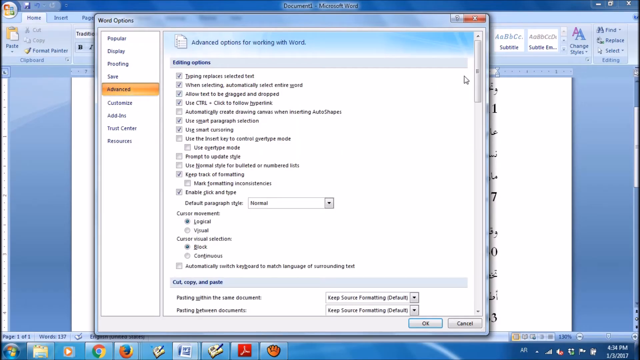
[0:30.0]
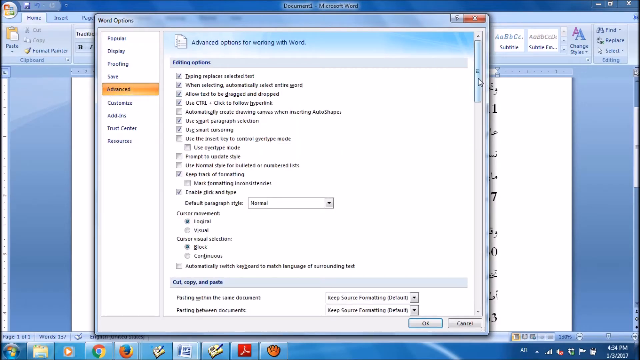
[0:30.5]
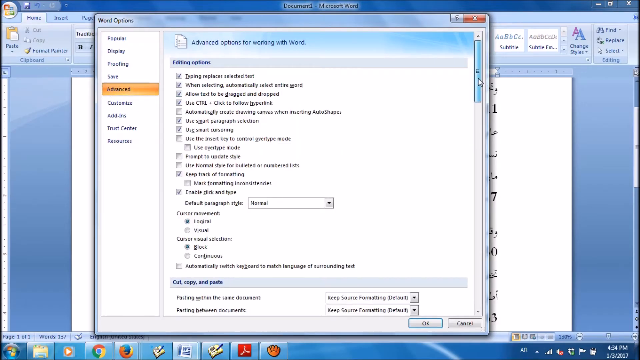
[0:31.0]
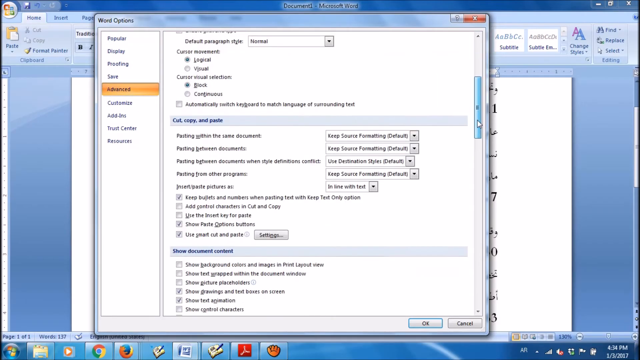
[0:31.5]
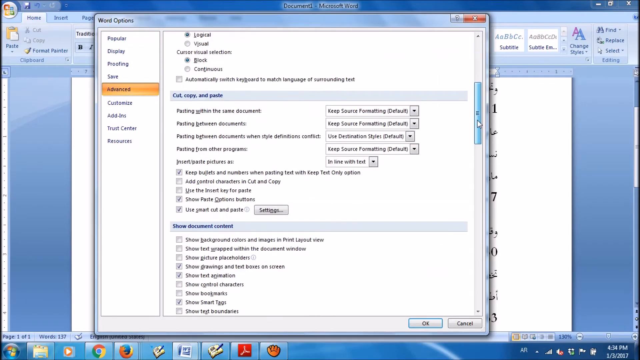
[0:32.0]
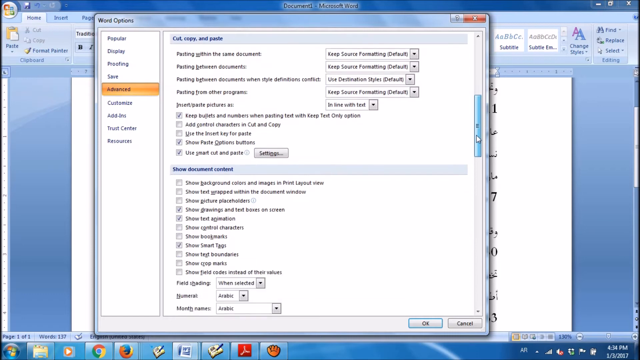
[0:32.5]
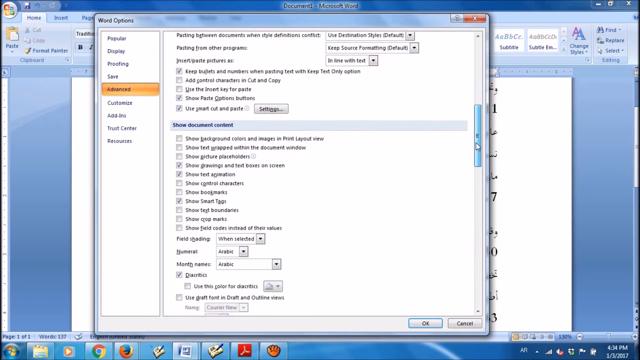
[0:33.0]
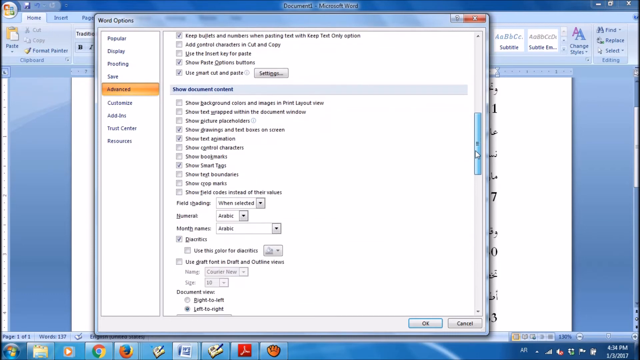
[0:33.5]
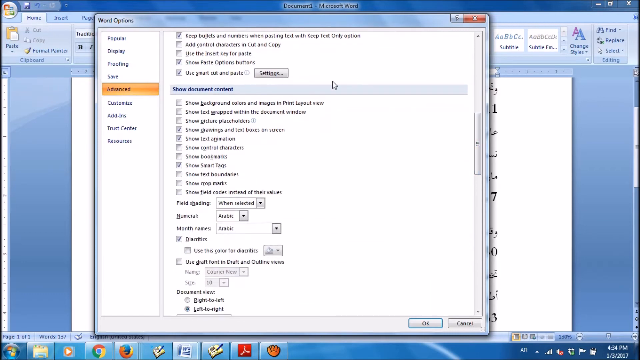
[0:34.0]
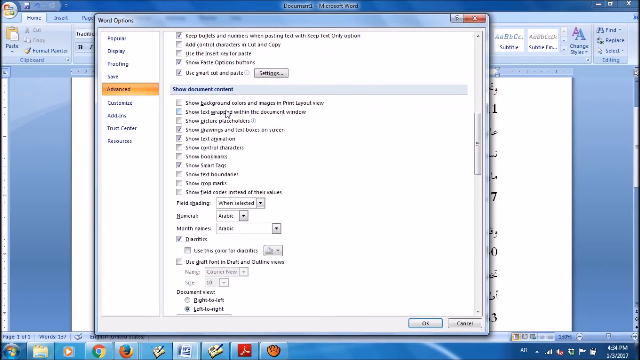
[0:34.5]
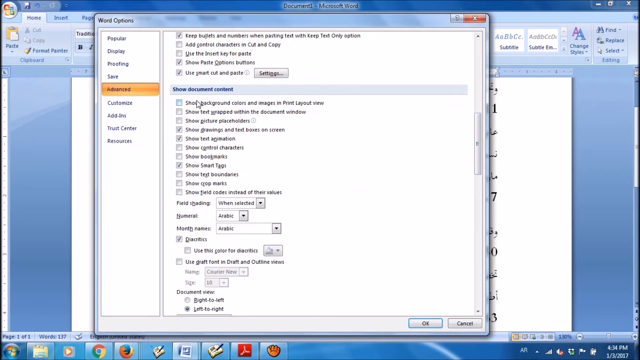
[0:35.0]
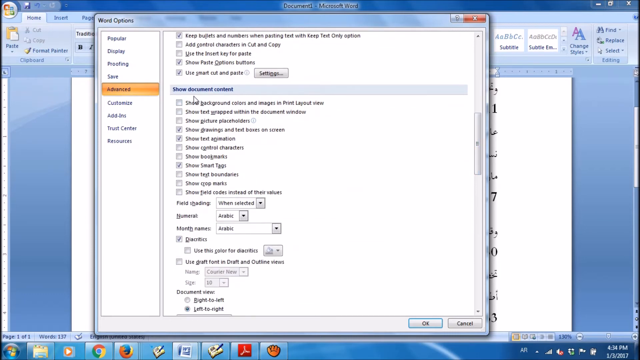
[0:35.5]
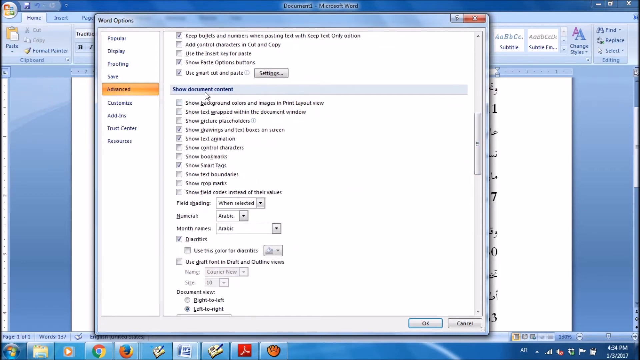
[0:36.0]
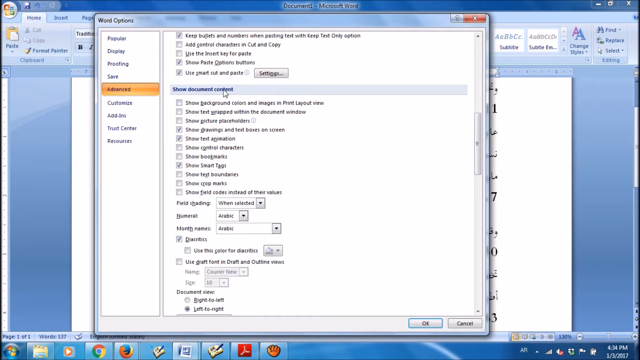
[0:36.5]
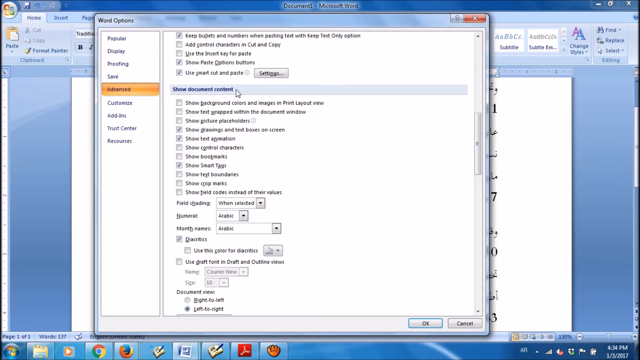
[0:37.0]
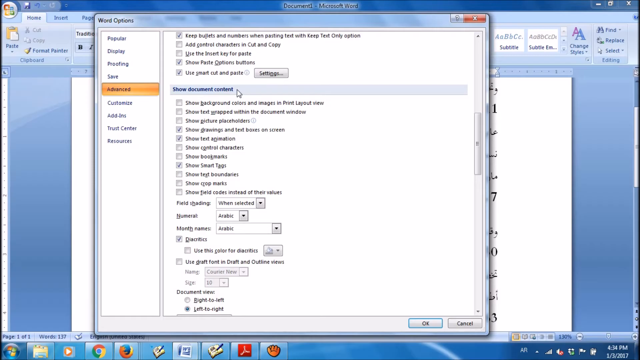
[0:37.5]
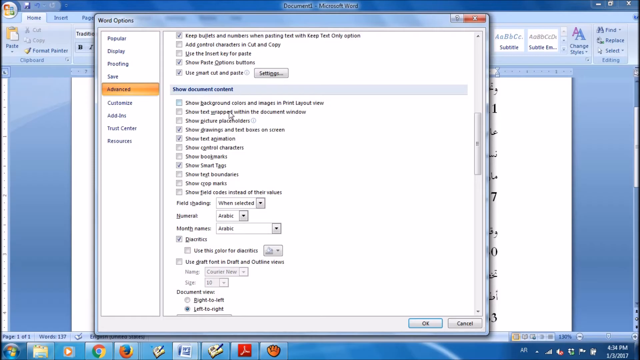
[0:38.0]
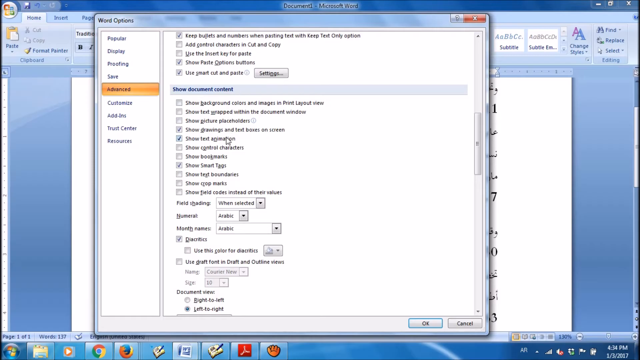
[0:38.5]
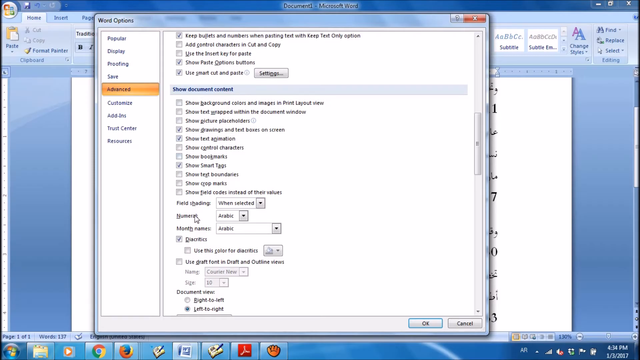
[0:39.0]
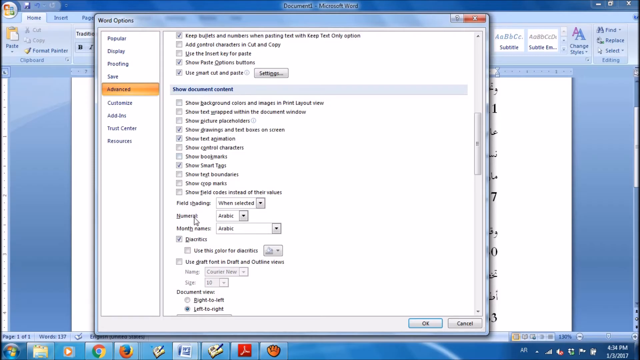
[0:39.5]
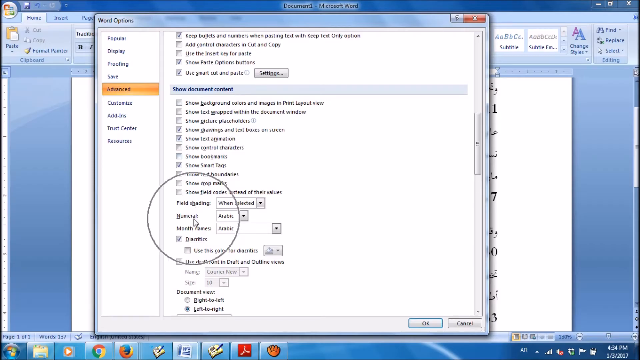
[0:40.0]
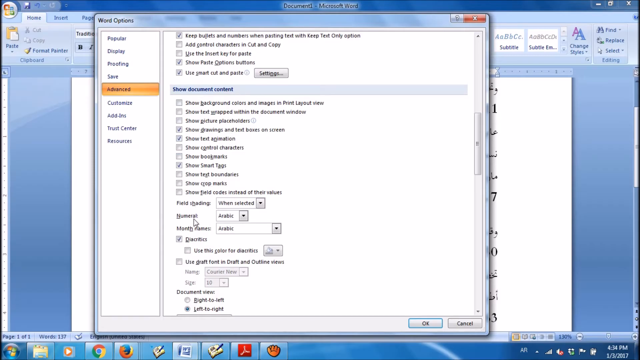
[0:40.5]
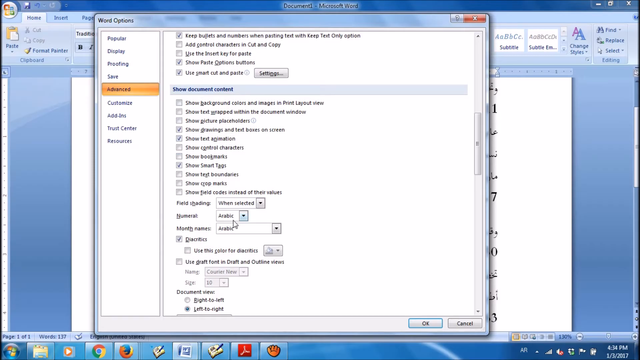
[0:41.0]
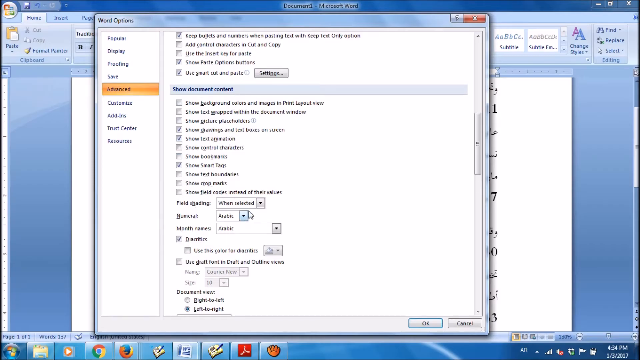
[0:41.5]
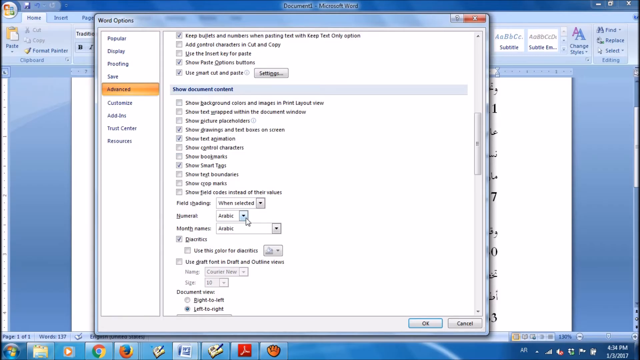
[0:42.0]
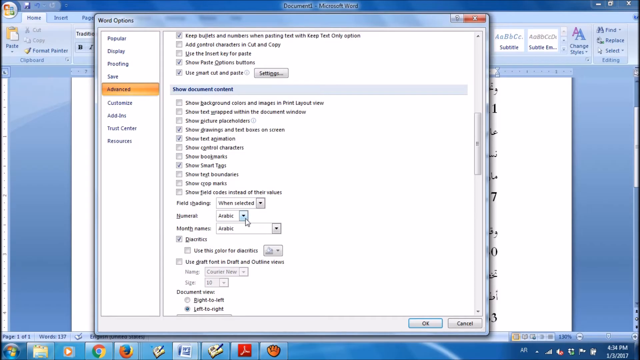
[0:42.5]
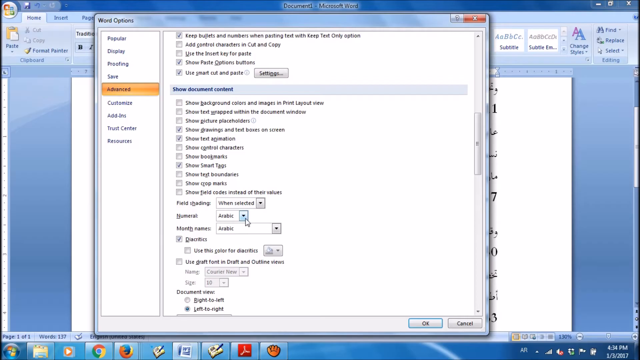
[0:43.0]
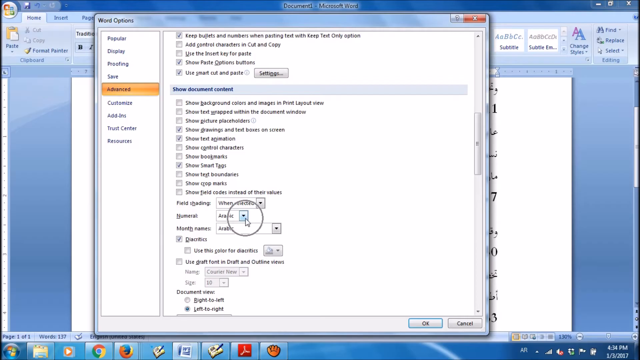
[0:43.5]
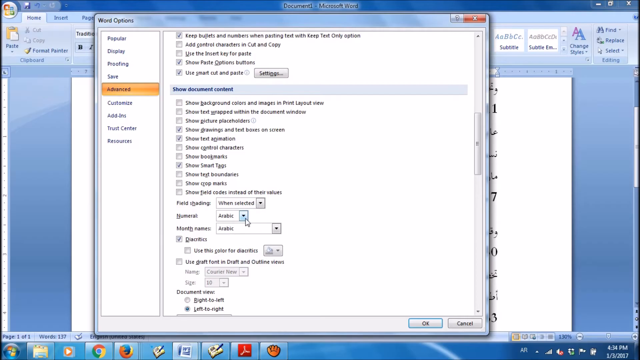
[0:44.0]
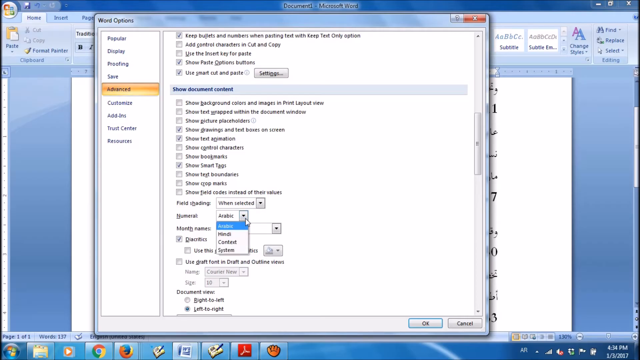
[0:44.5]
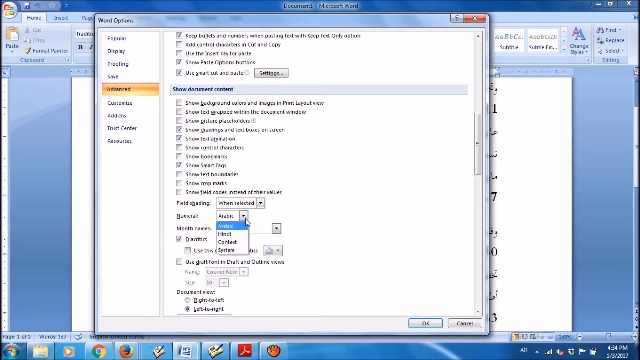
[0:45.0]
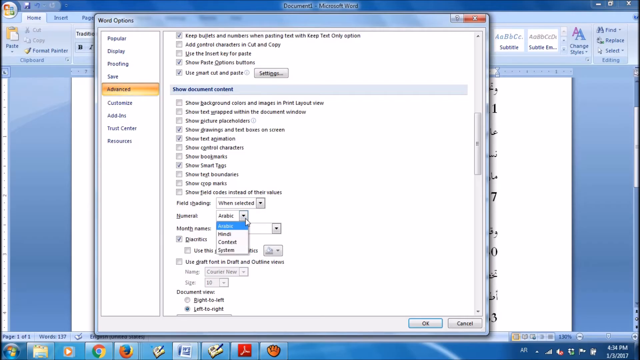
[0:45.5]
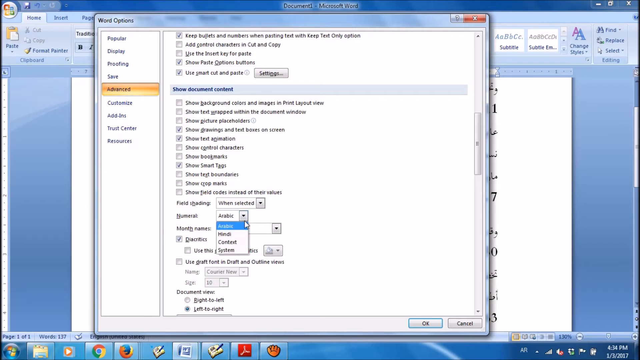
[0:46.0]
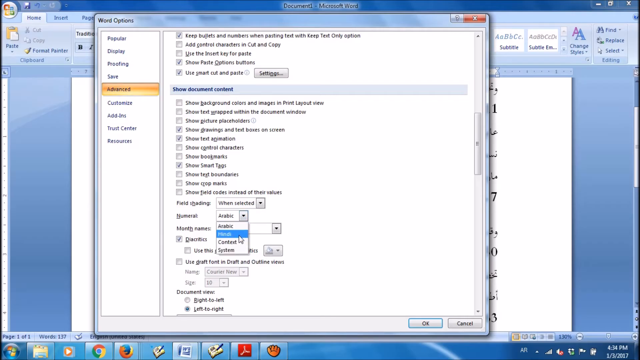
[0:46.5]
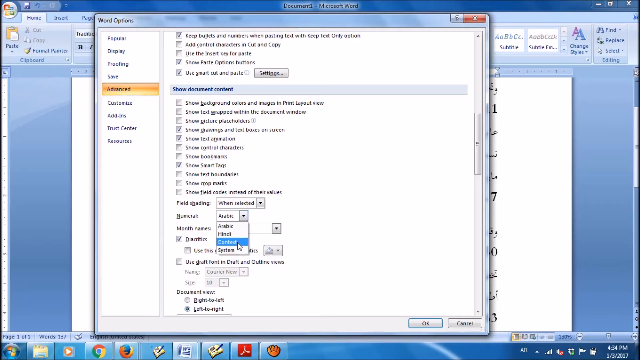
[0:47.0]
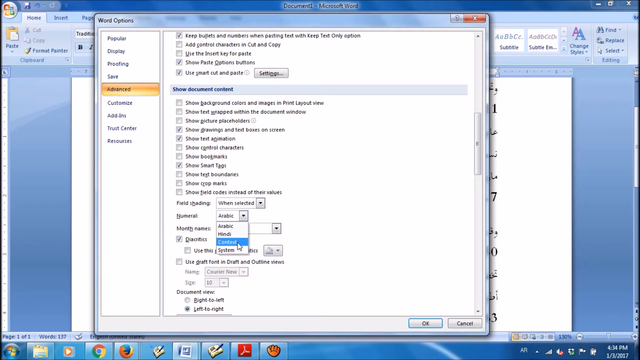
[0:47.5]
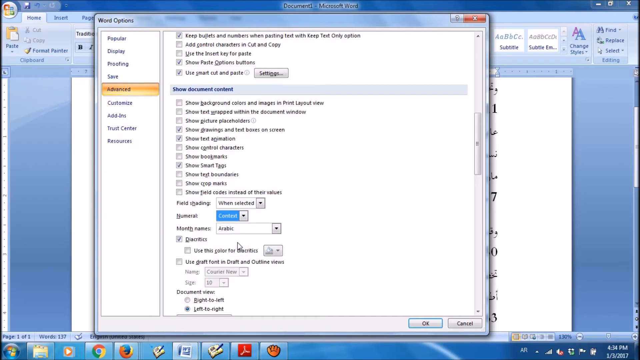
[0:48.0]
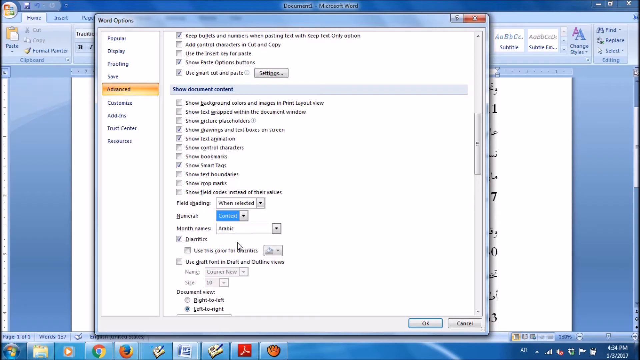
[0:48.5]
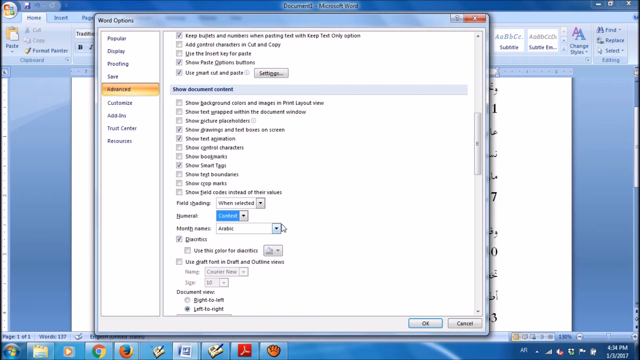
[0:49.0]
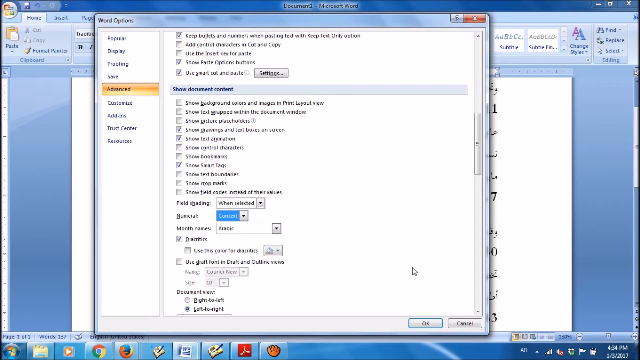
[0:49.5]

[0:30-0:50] A lot of information is shown together on screen, all of it in English. A person appears to be adjusting some settings, possibly to make choices or changes in the document.